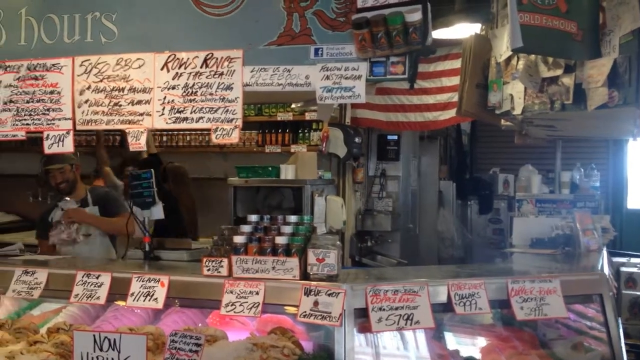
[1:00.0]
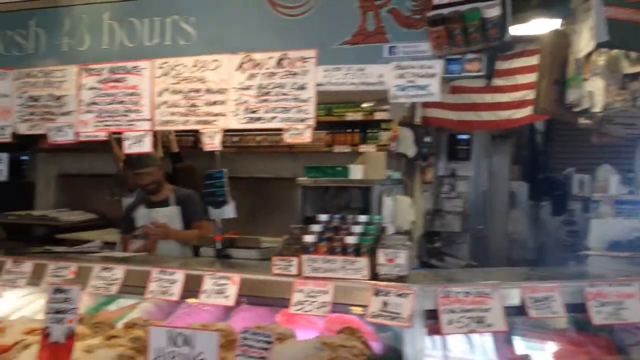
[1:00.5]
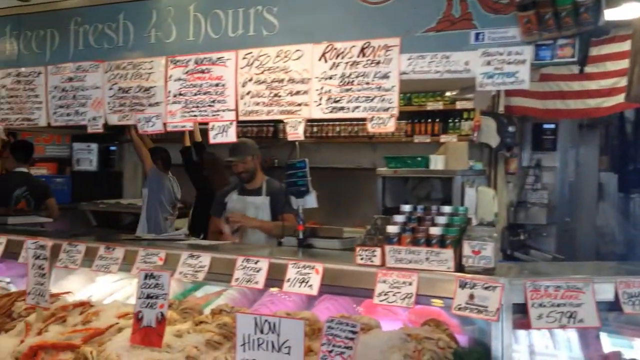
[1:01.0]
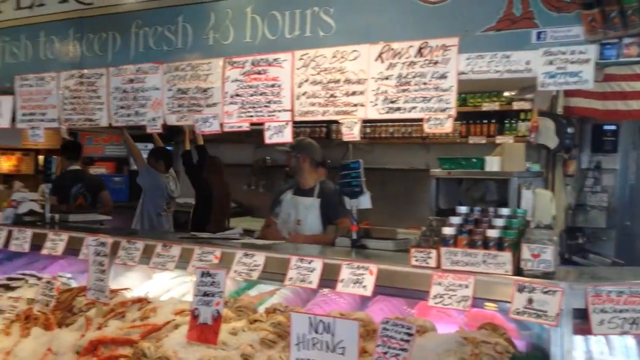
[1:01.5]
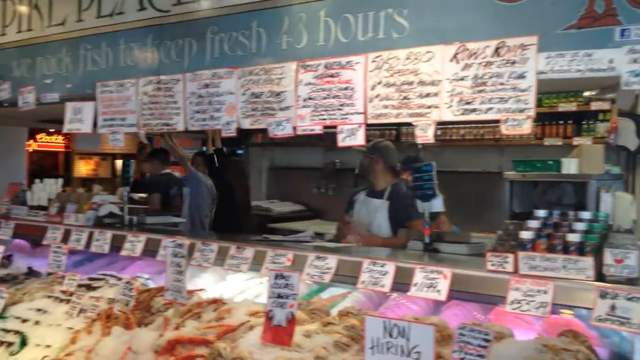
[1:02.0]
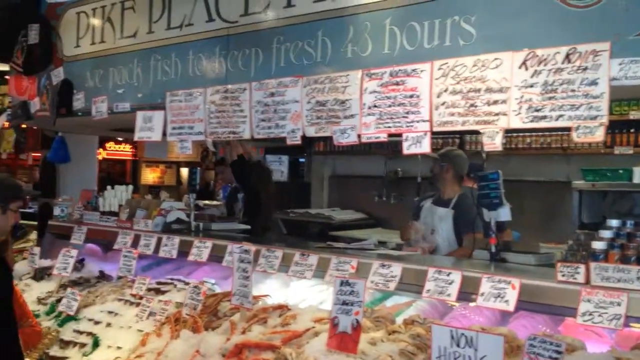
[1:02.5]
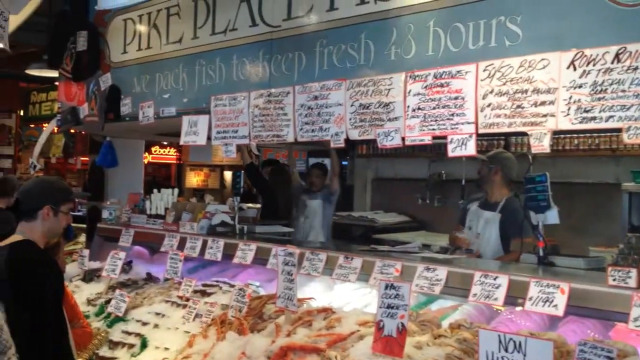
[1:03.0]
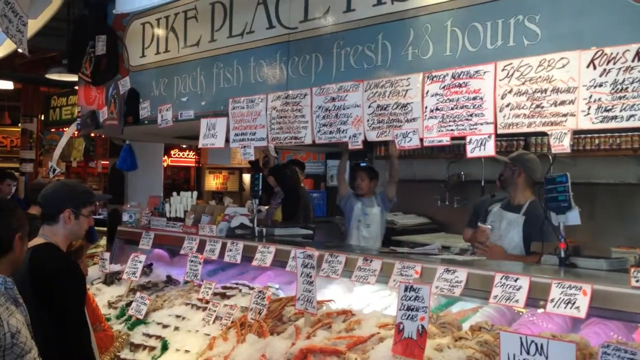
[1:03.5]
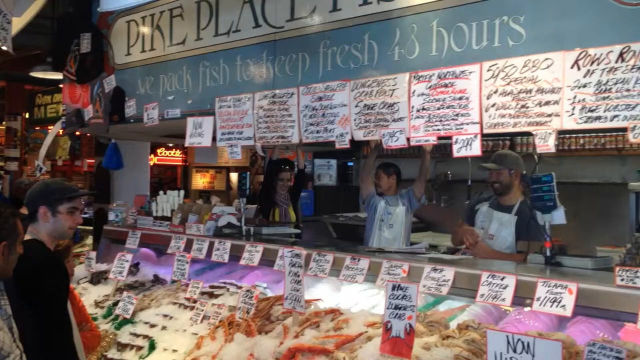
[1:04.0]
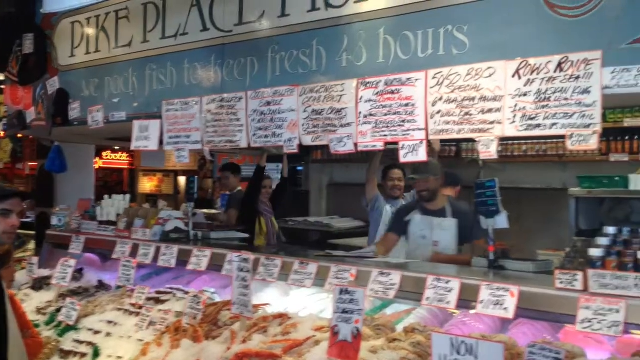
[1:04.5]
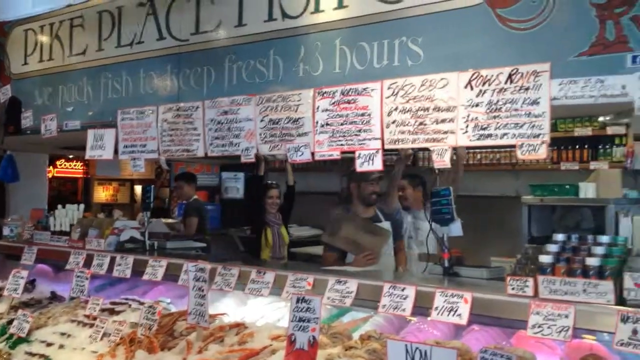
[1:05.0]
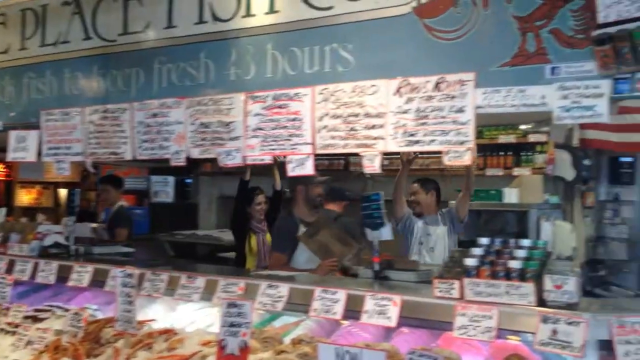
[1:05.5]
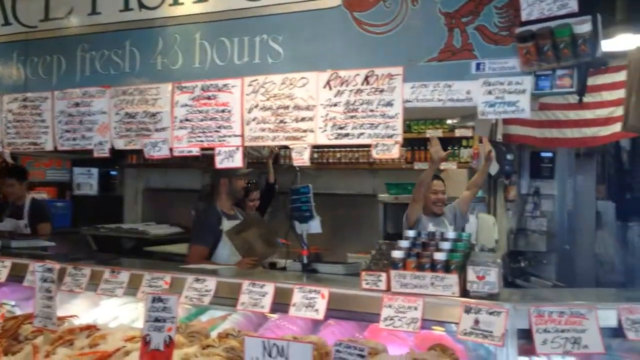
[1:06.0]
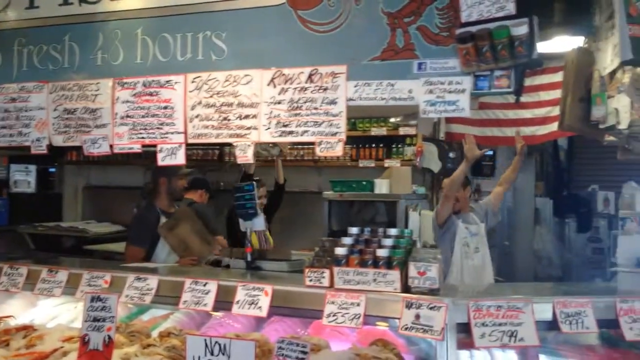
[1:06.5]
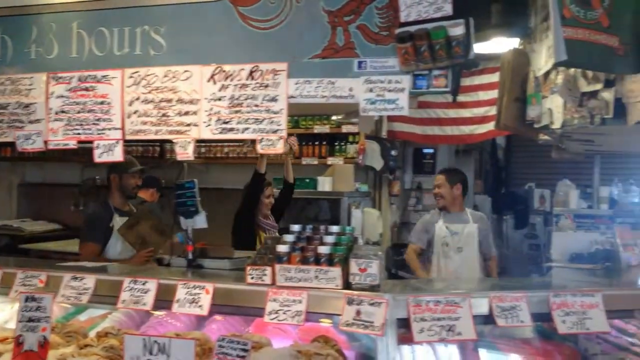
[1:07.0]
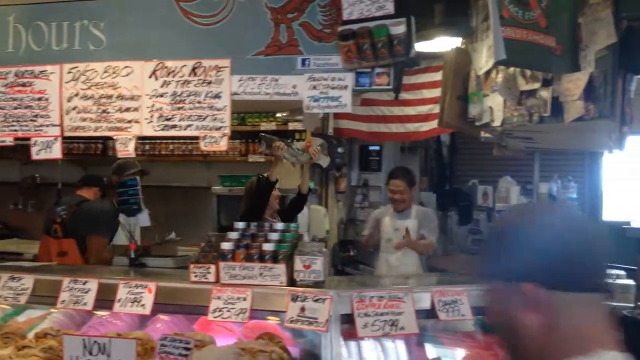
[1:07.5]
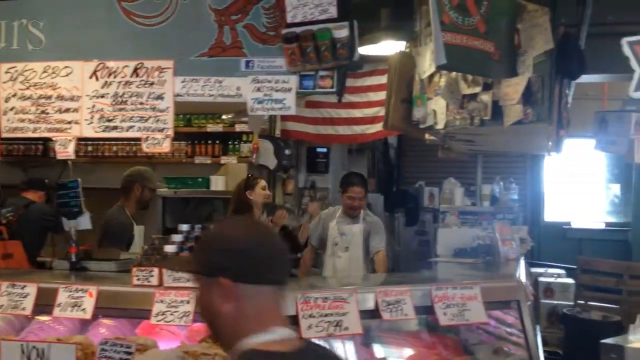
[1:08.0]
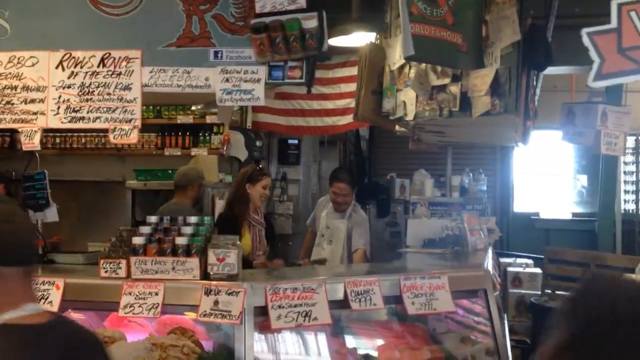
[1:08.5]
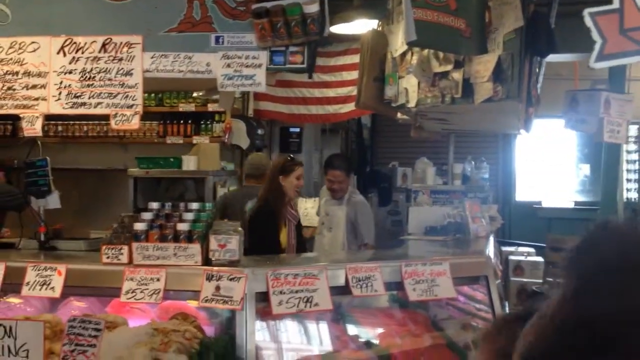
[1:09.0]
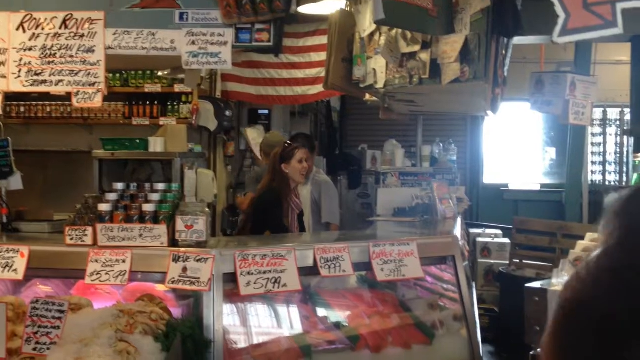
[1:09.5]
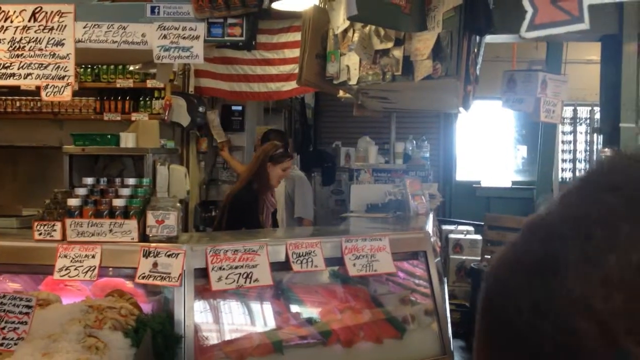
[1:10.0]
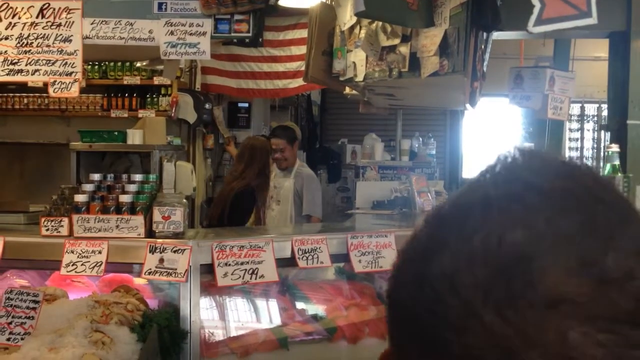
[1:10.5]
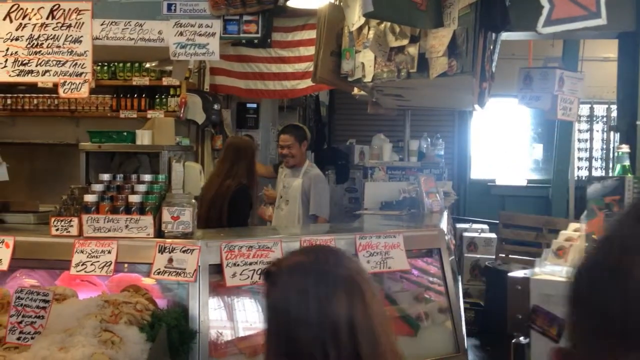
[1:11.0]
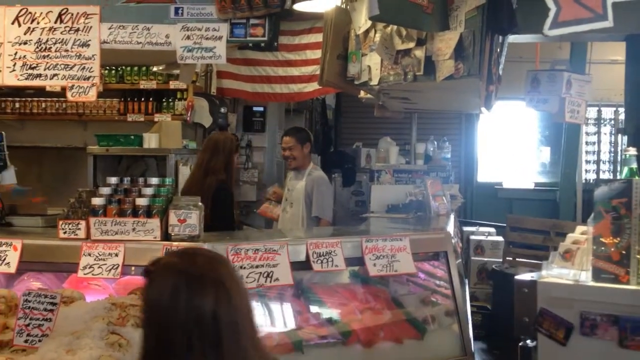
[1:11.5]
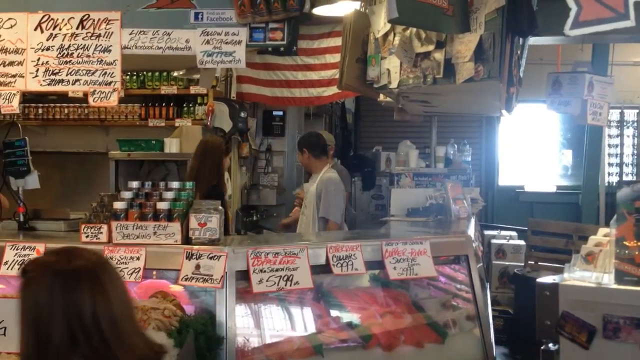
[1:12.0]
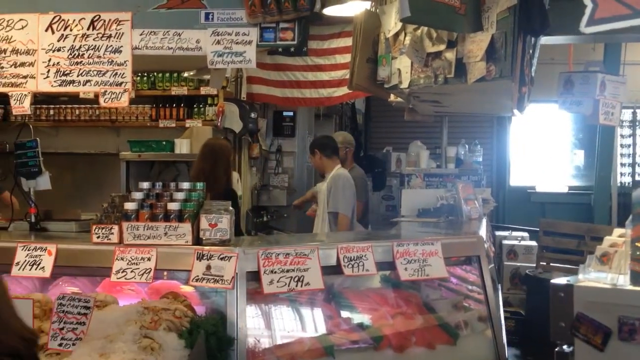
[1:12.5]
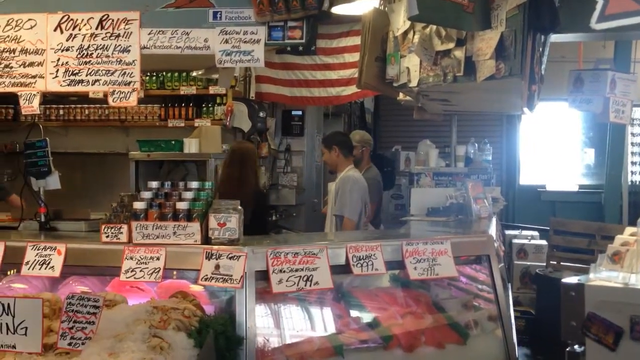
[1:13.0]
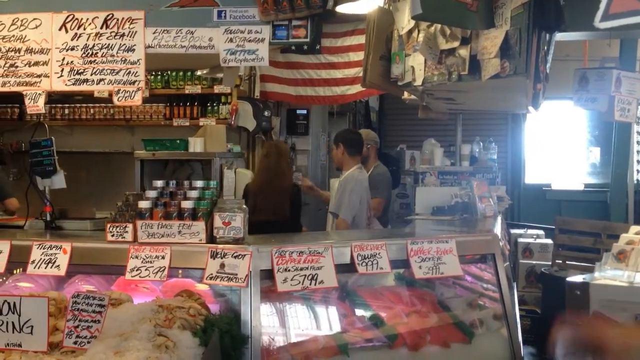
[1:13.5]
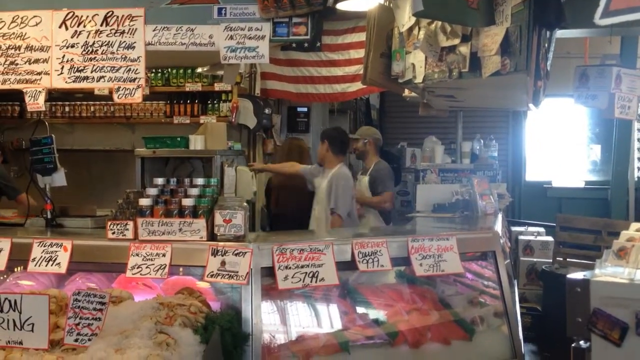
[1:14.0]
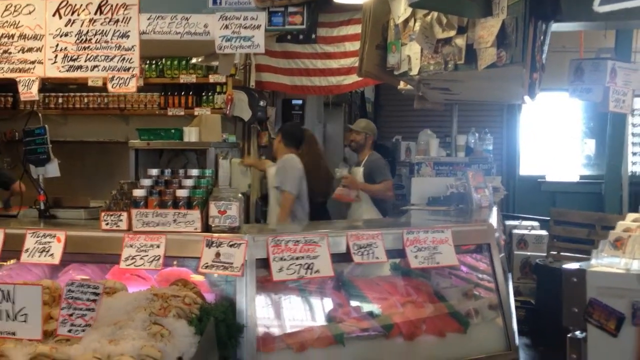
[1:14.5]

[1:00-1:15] After she catches the fish, another cook behind the counter shows her how to hold the fish over her head and marches her all the way down the counter to the left side of this little restaurant and fish market. All sorts of fish lie within the cases, under and between the handwritten signs. Above the counter a sign says "Pike Place", along with something about packing fish to keep fresh for either 43 or 23 hours, which is unclear. The cashier marches behind the counter holding her fish over her head.